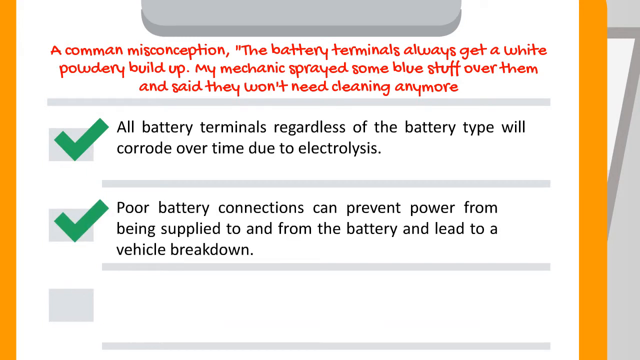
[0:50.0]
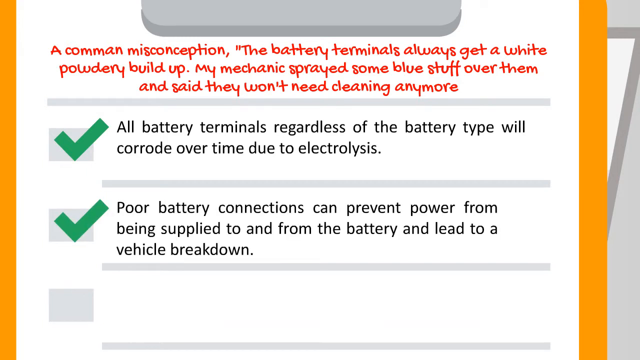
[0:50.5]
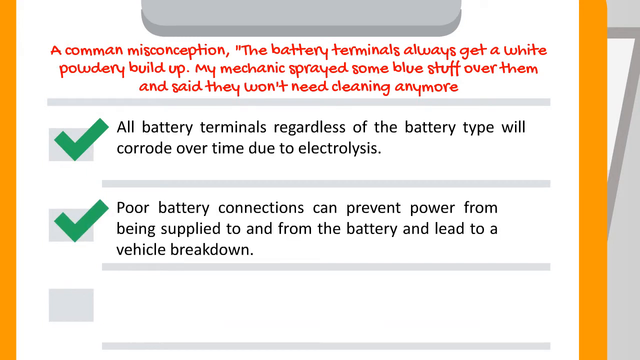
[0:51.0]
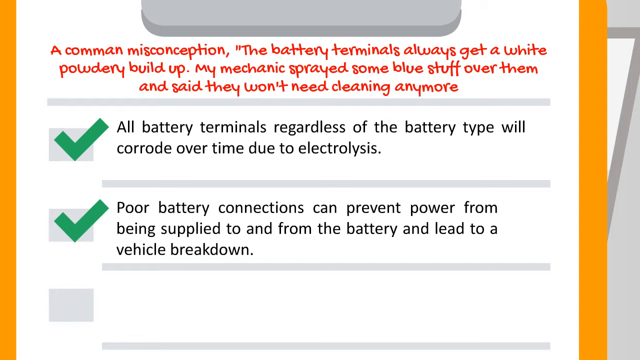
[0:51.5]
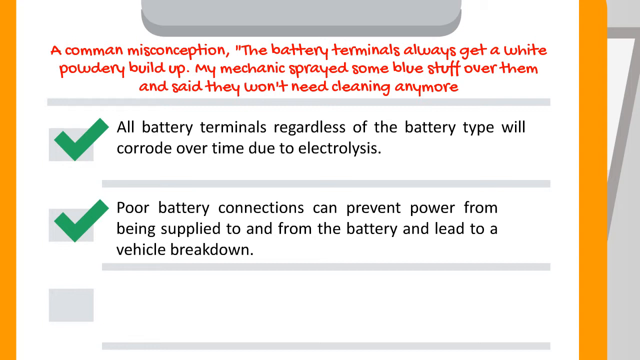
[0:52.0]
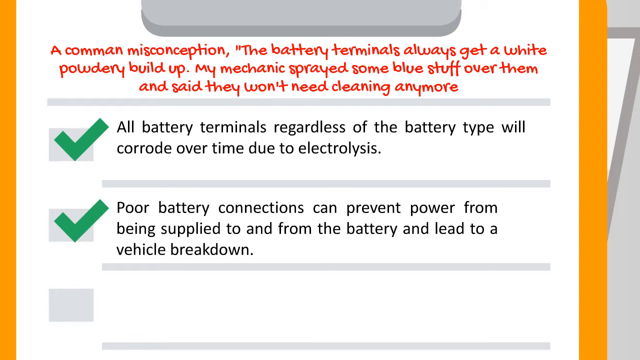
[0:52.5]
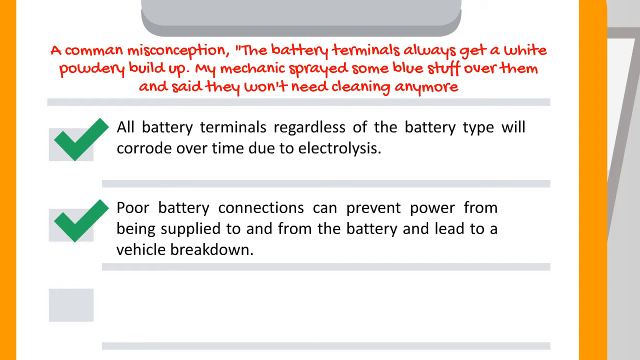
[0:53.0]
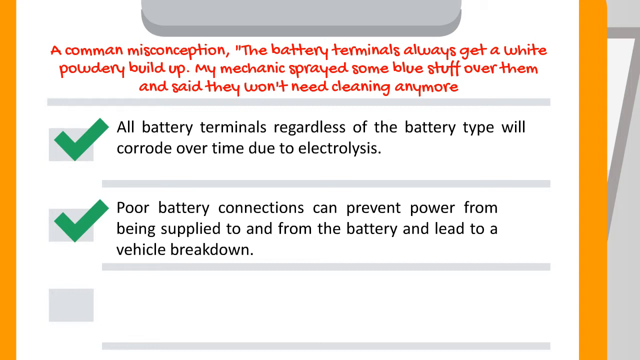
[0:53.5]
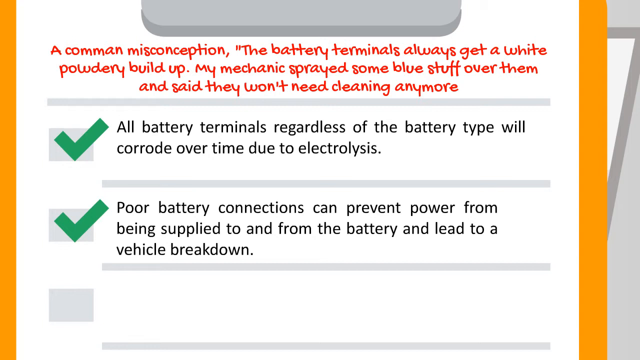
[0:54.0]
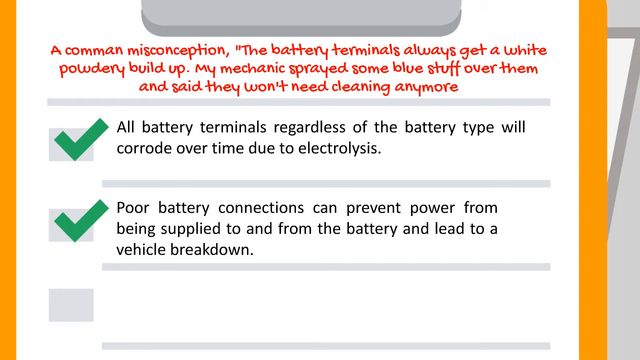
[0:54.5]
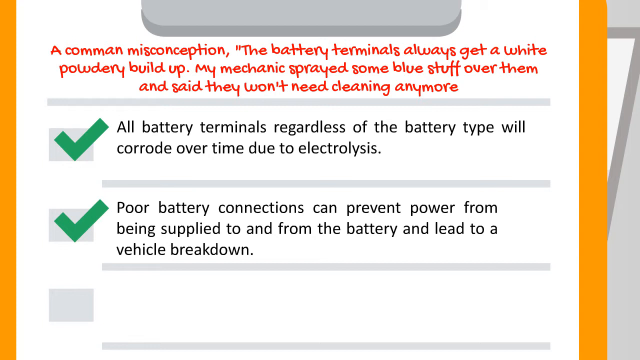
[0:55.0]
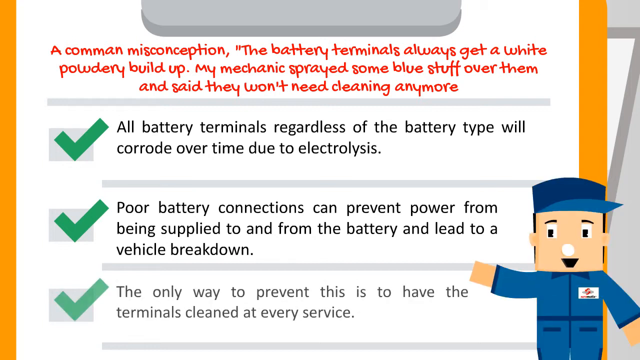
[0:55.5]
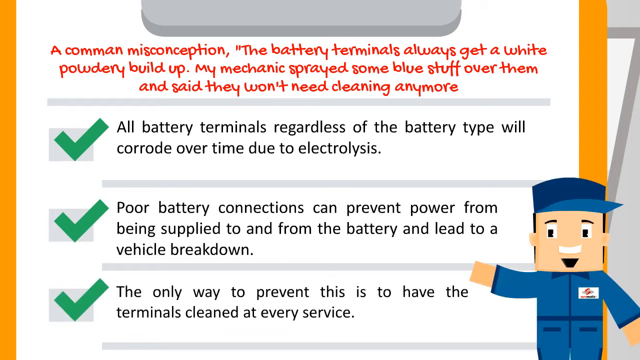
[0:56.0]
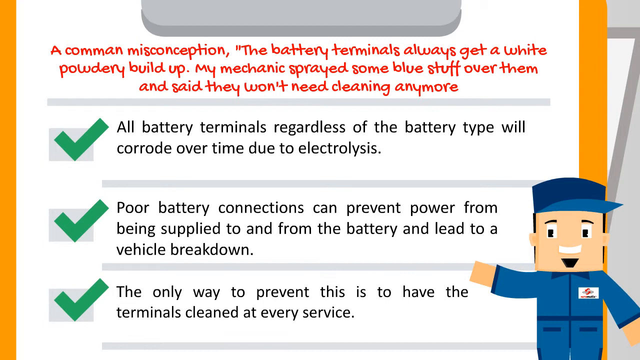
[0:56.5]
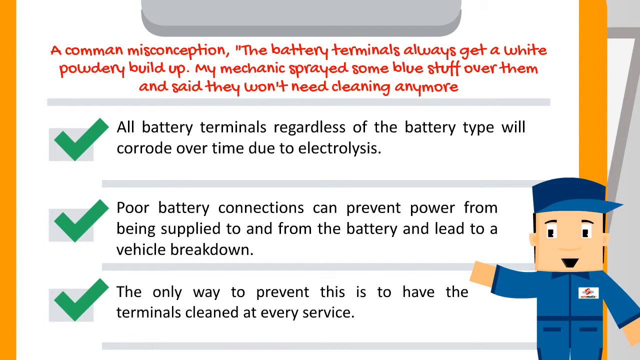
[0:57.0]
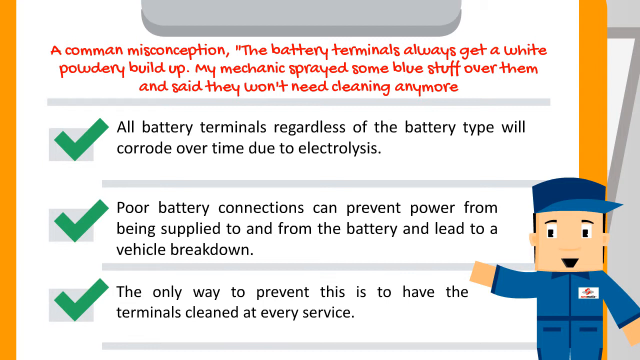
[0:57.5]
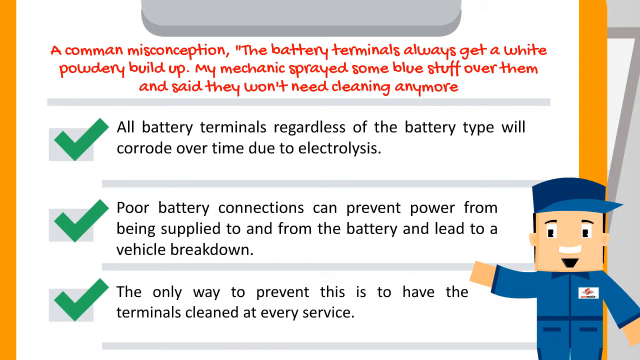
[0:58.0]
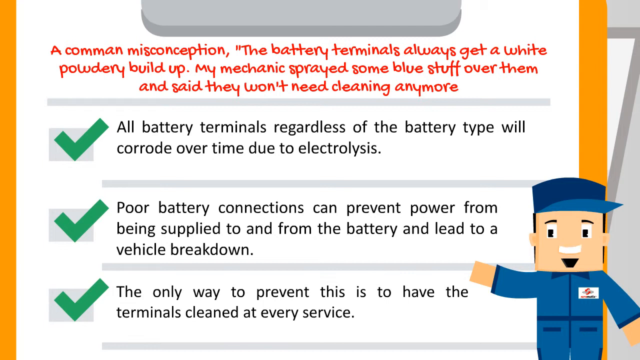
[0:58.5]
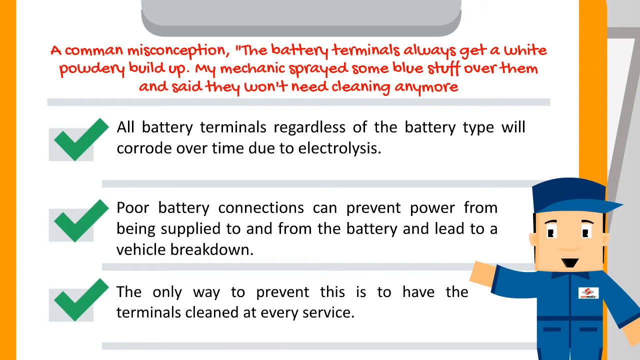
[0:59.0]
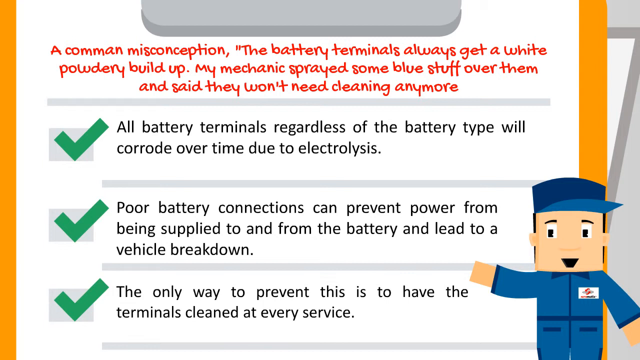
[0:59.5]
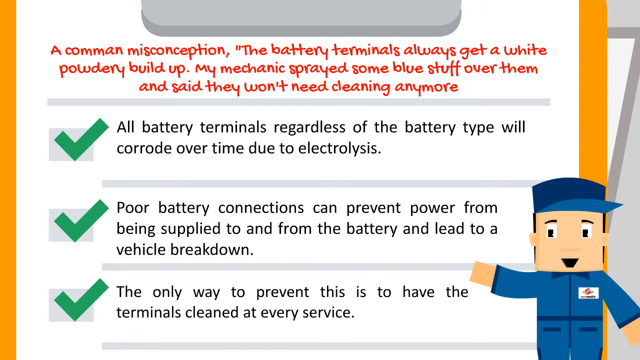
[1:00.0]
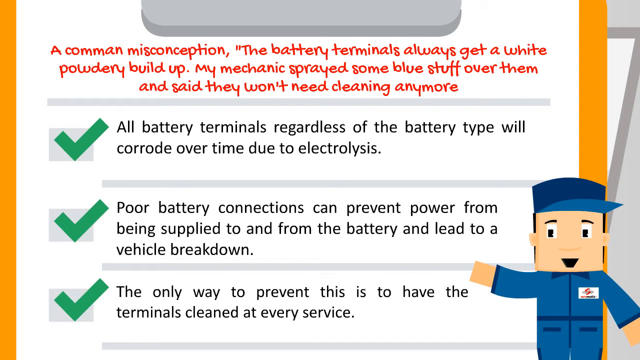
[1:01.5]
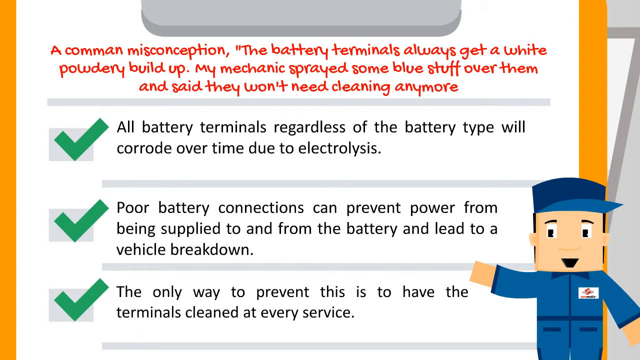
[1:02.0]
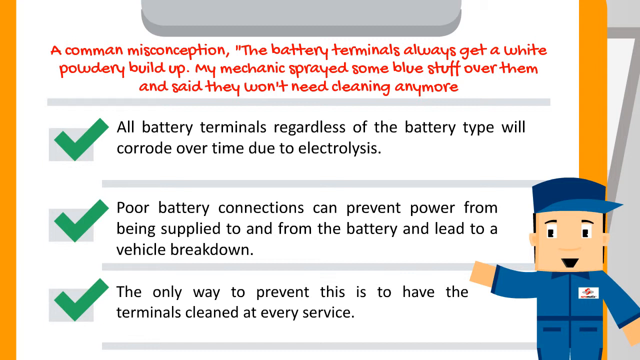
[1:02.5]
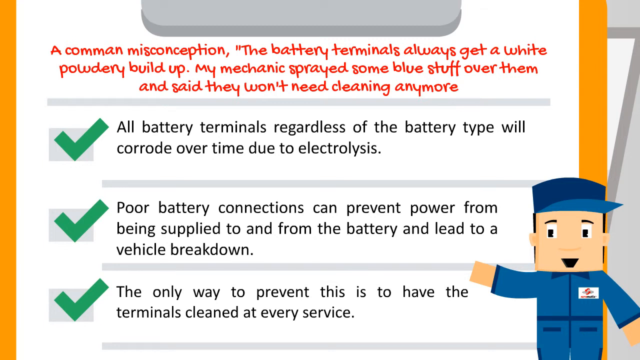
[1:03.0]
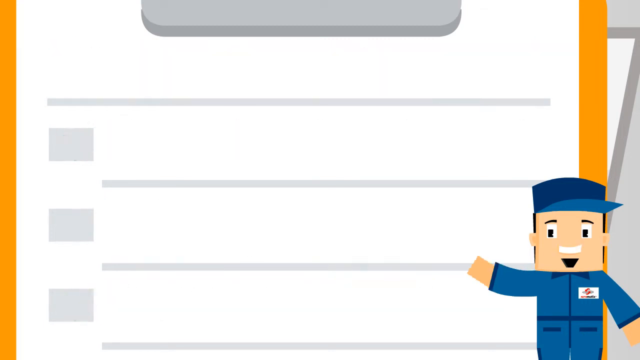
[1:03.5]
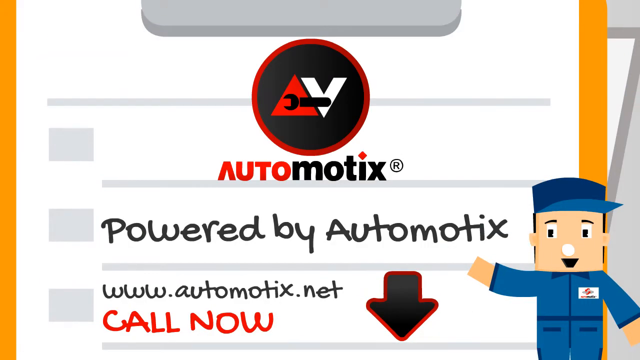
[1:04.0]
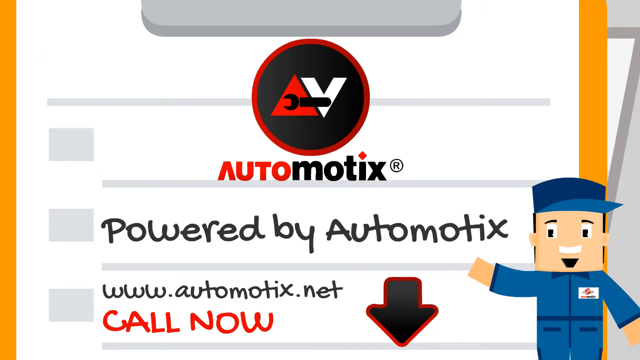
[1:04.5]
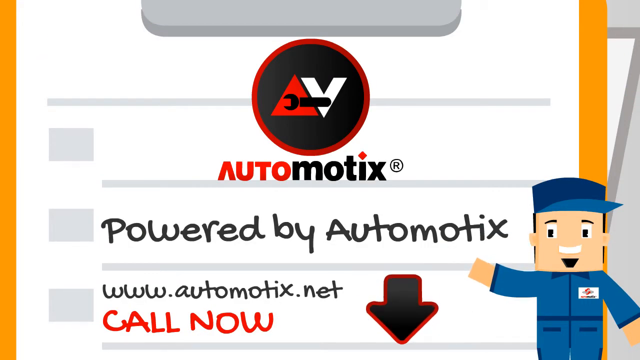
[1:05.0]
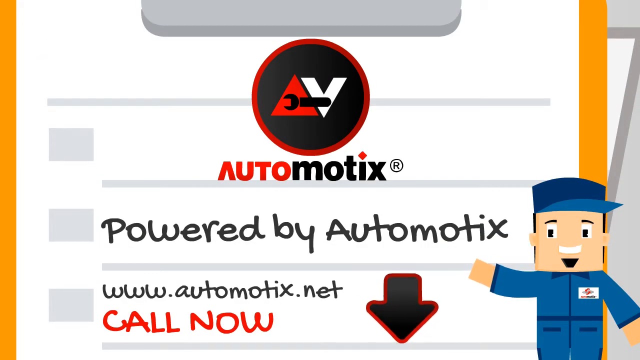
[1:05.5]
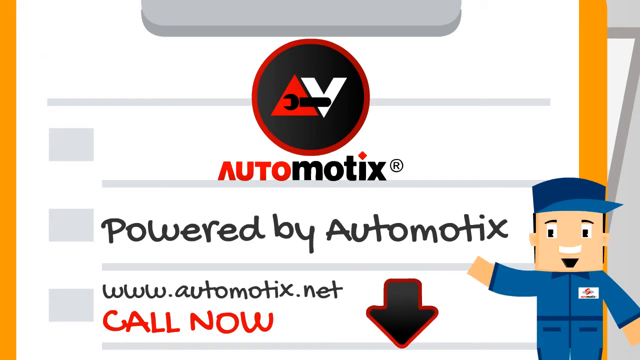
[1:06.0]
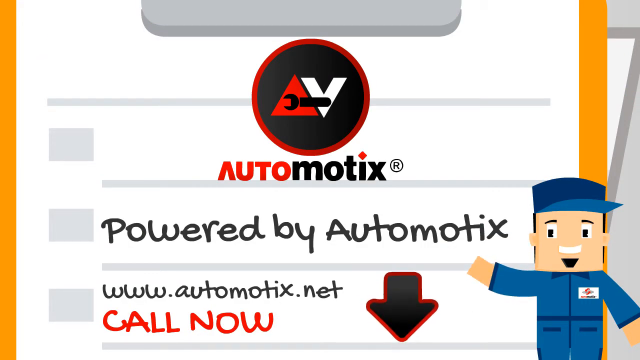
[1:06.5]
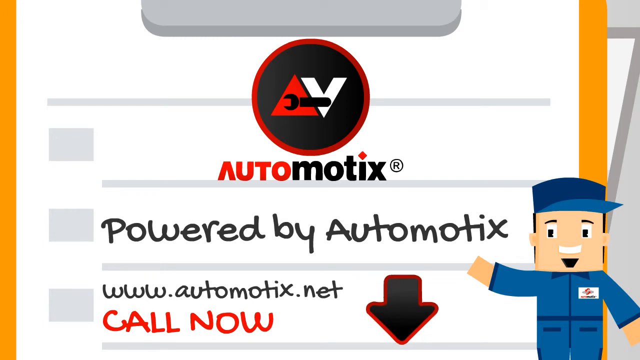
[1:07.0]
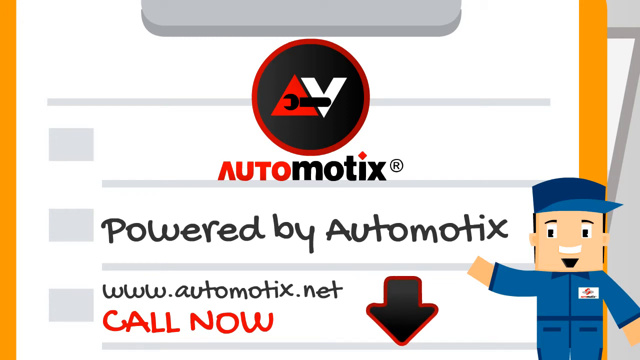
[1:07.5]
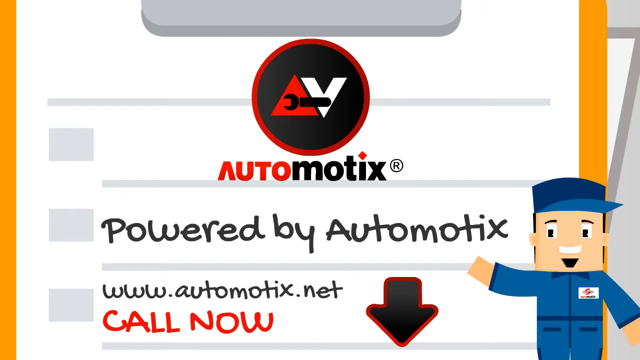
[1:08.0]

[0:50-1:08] A close-up shows a checklist. At the top, in a red handwriting font, it says "a common misconception," with "common" spelled with an A, followed by "The battery terminals always get a white powdery buildup. My mechanic sprayed some blue stuff over them and said they won't need cleaning anymore," which does not close with quotation marks. Below that, a green checkmark checks off an item that reads "all battery terminals regardless of the battery type will corrode over time due to electrolysis." Under that, another green check is next to an item that reads "poor battery connections can prevent power from being supplied to and from the battery and lead to a vehicle breakdown." Then a man in a blue outfit and blue hat, suggesting a uniform, slides into view in the bottom right corner of the screen; he is evidently a mechanic. Another green check appears next to an item that says "the only way to prevent this is to have the terminals cleaned at every service." The mechanic speaks to the viewer. Then a logo appears that says "Automotix," spelled with "M-O-T-I-X." In a handwriting font it reads "Powered by Automotix," and under that is a URL that reads "www.automotix.net" along with "Call Now" and an arrow pointing down. The mechanic in the blue outfit and blue hat remains on screen, speaking to the viewer.